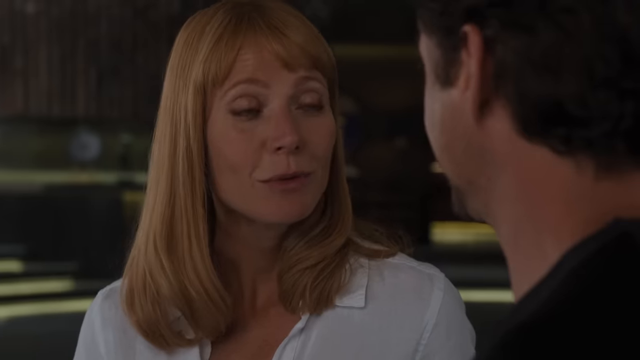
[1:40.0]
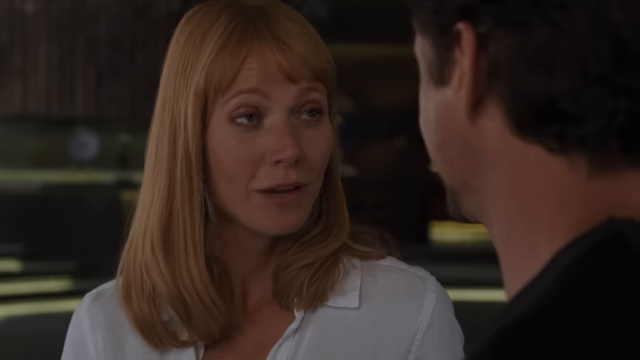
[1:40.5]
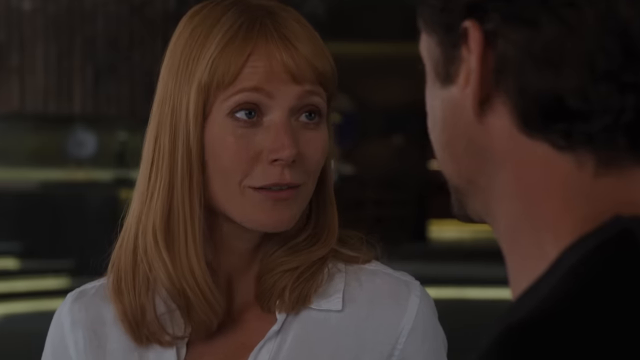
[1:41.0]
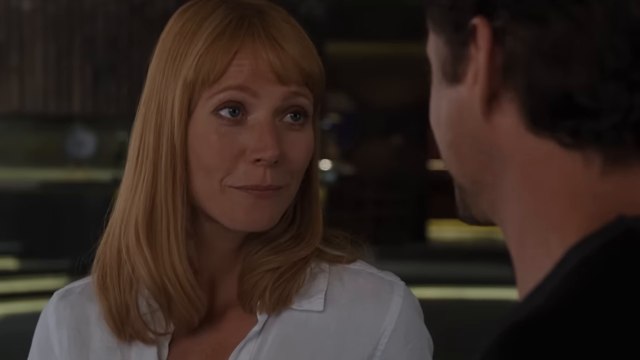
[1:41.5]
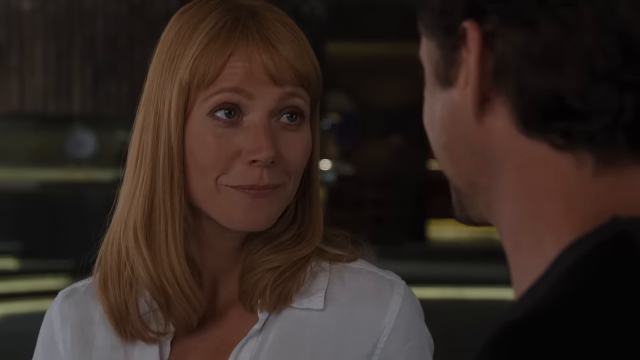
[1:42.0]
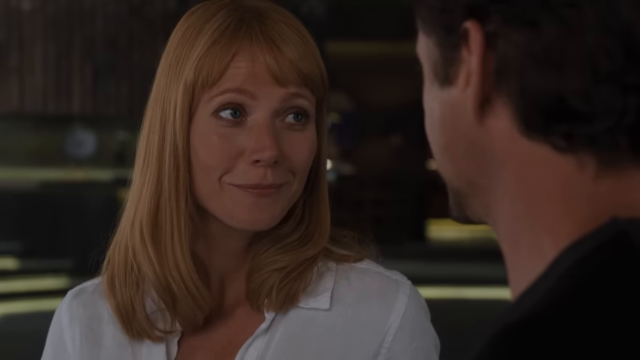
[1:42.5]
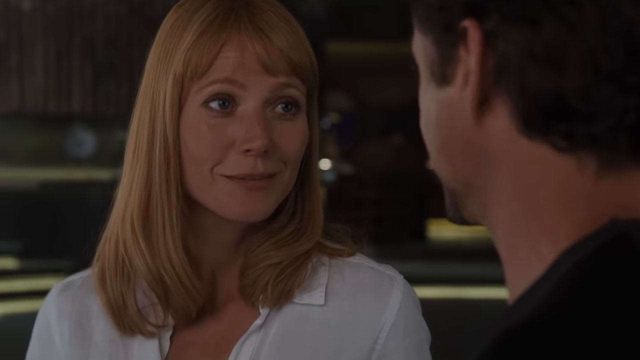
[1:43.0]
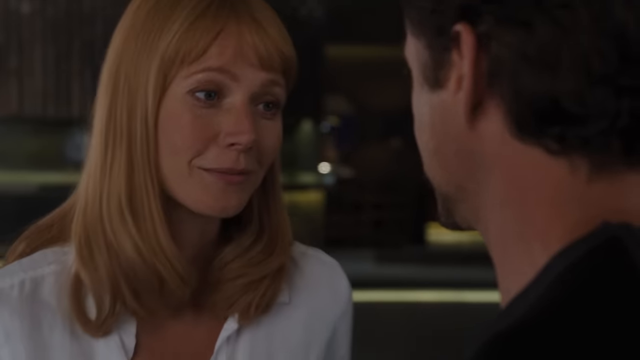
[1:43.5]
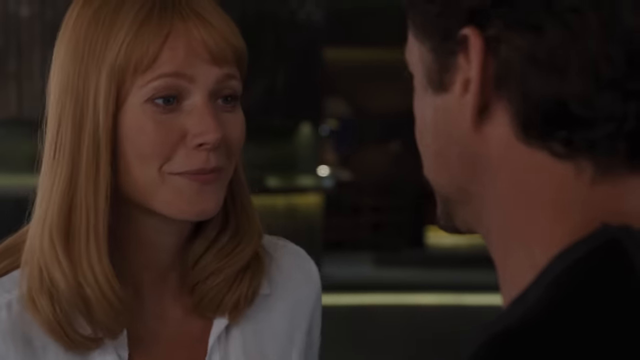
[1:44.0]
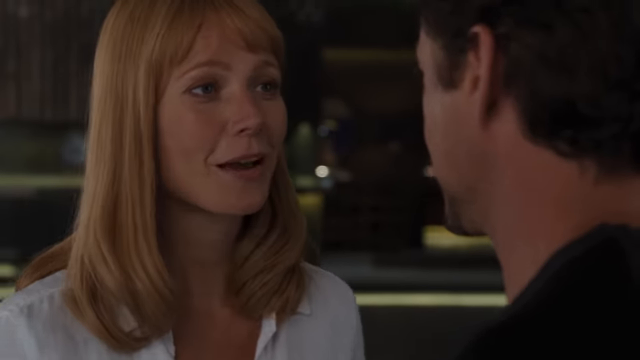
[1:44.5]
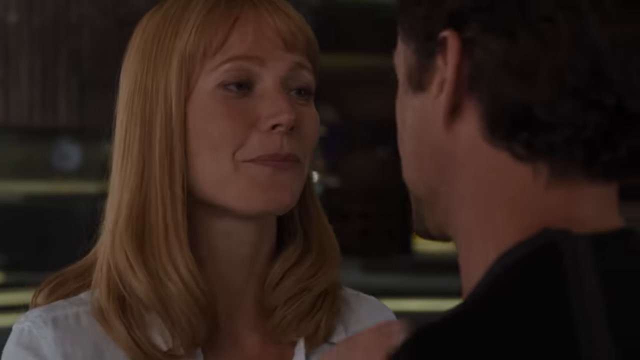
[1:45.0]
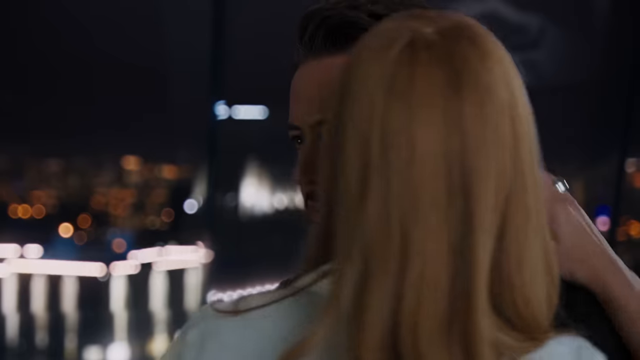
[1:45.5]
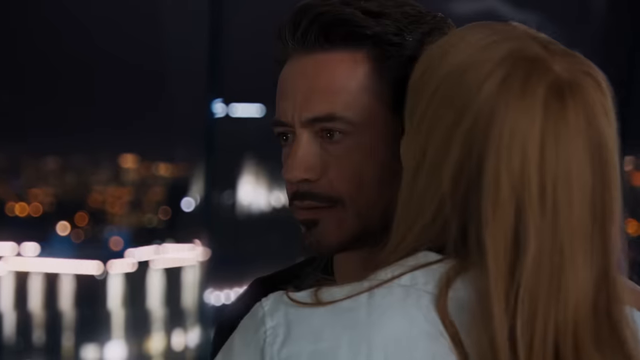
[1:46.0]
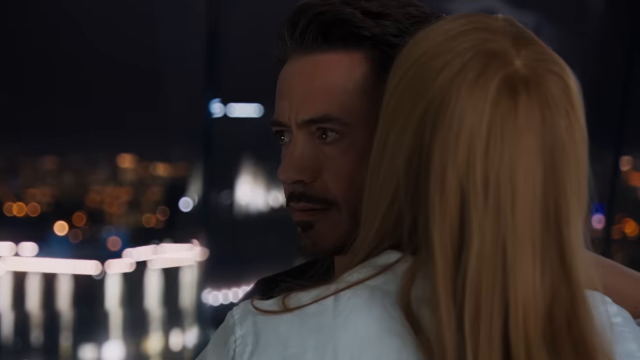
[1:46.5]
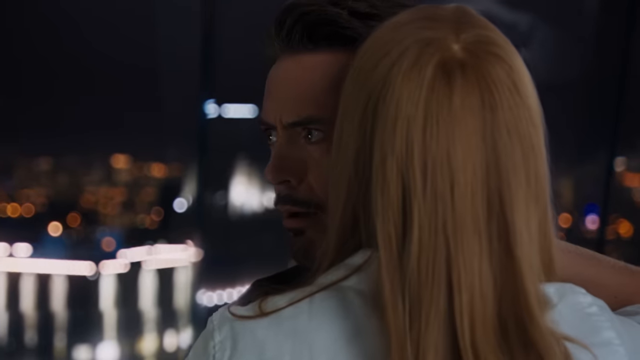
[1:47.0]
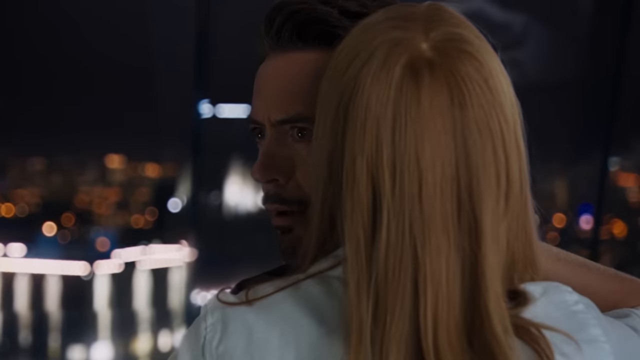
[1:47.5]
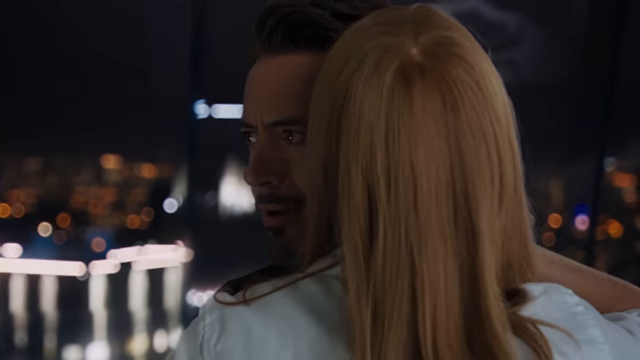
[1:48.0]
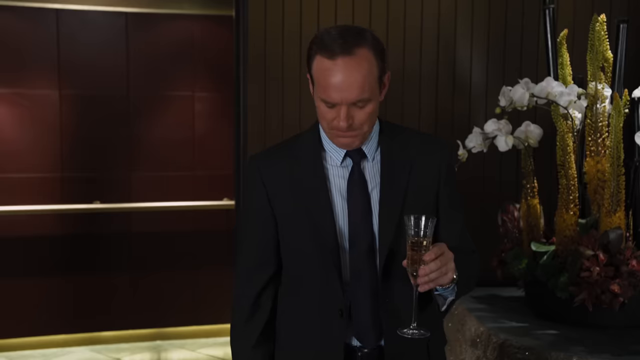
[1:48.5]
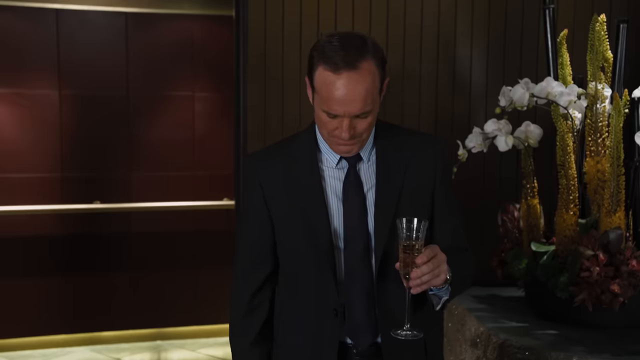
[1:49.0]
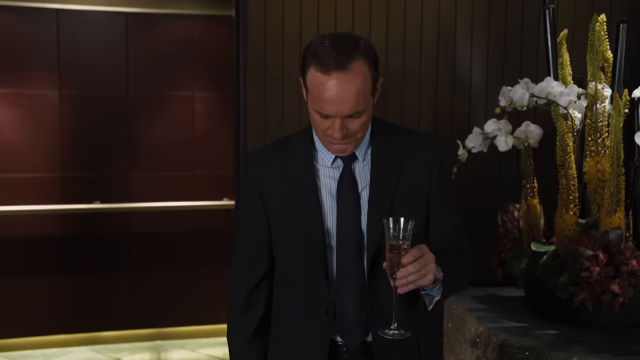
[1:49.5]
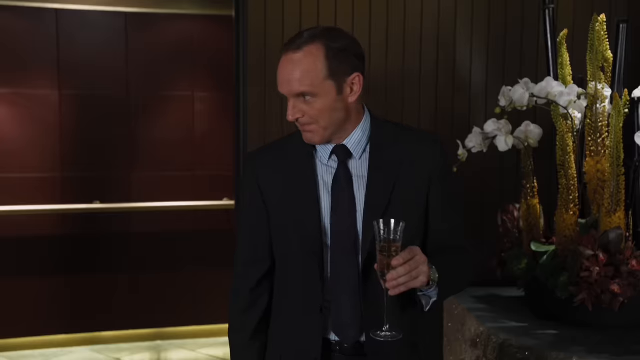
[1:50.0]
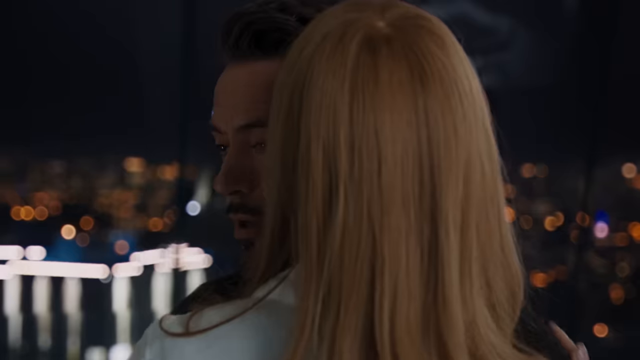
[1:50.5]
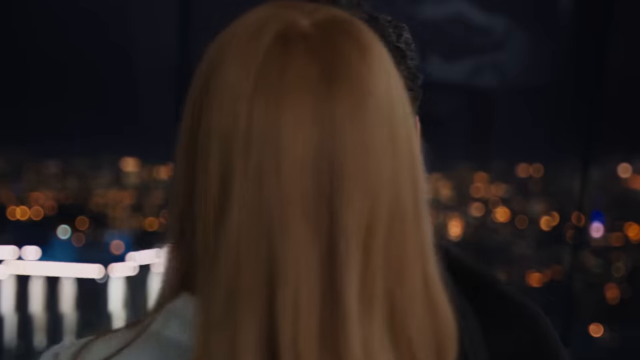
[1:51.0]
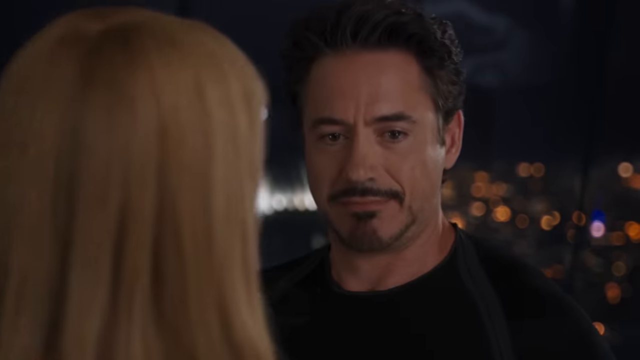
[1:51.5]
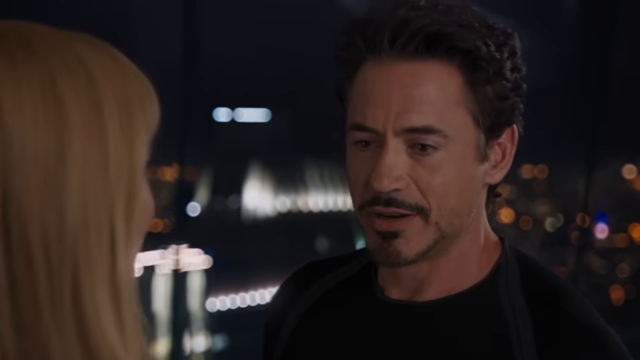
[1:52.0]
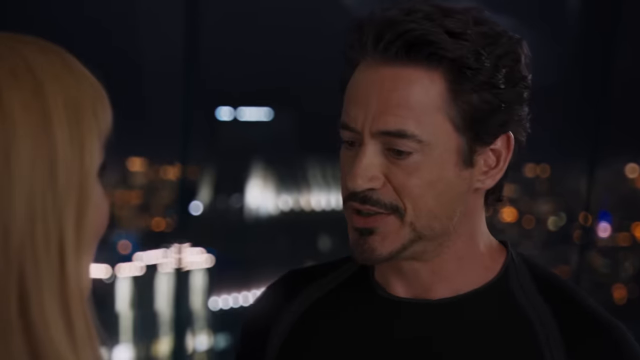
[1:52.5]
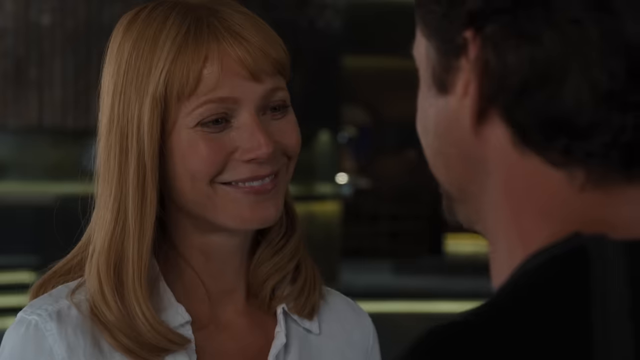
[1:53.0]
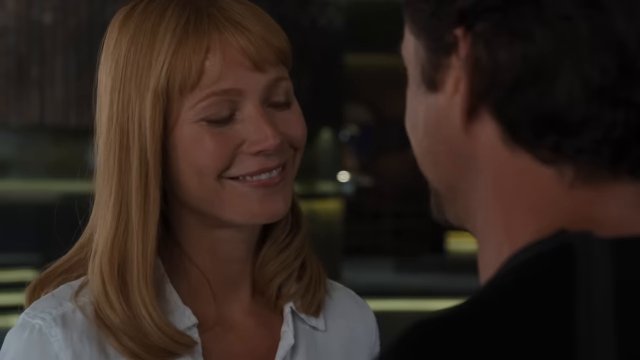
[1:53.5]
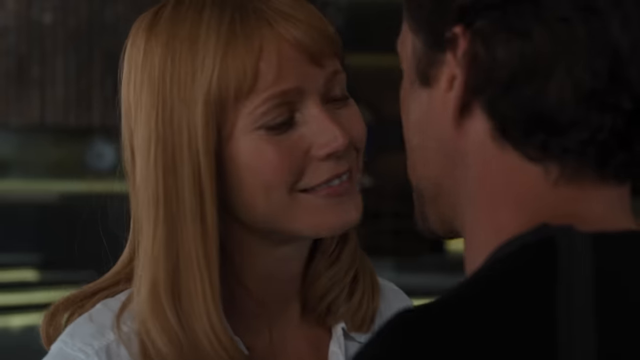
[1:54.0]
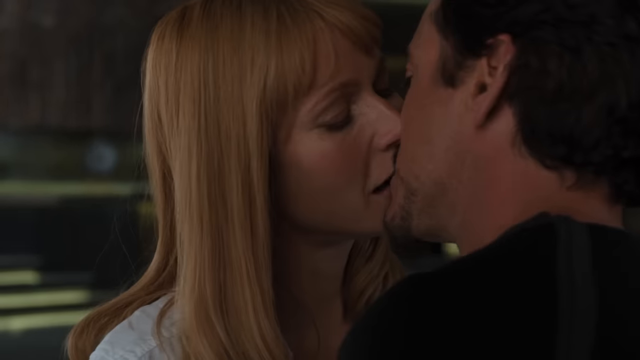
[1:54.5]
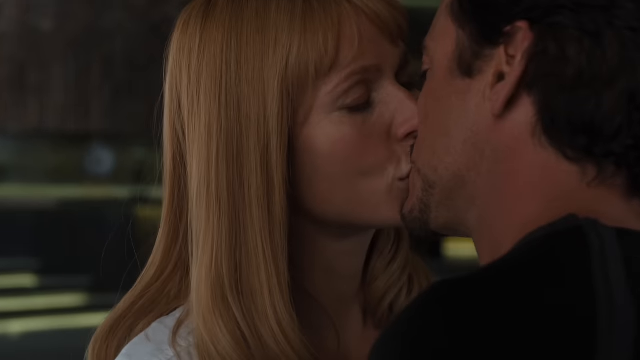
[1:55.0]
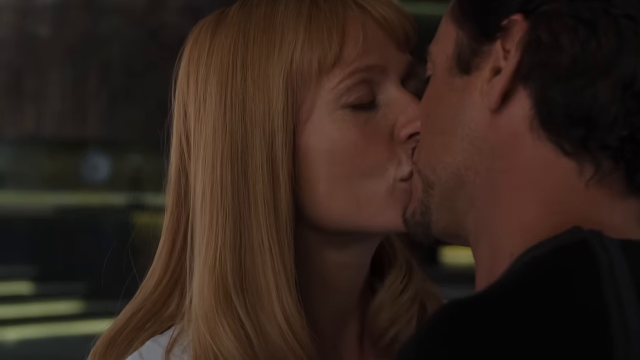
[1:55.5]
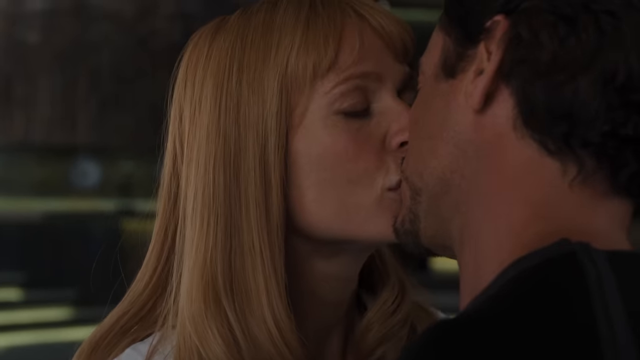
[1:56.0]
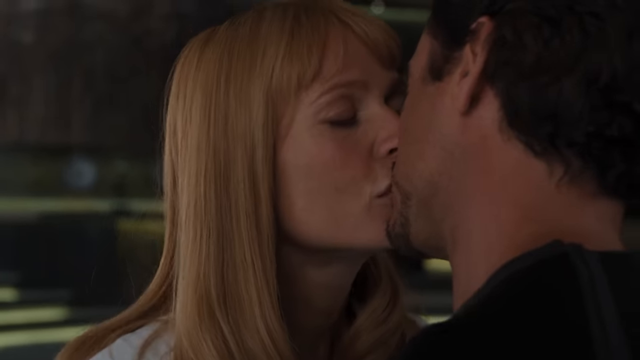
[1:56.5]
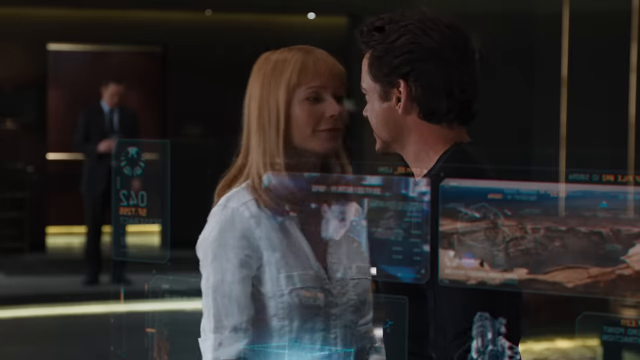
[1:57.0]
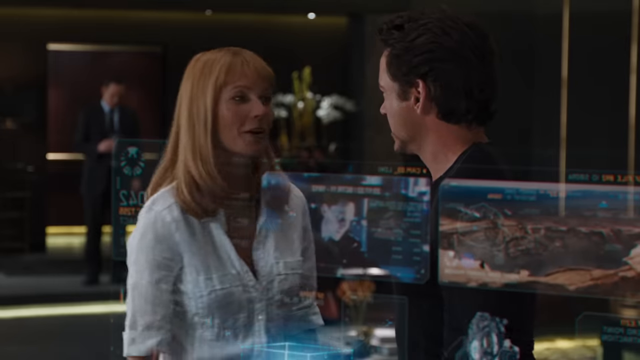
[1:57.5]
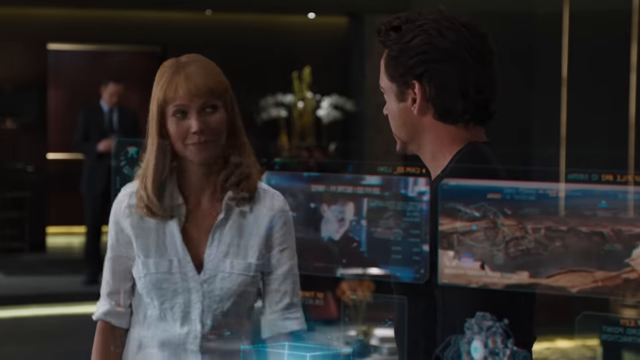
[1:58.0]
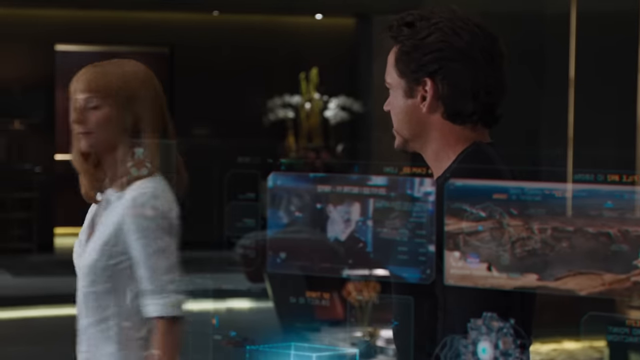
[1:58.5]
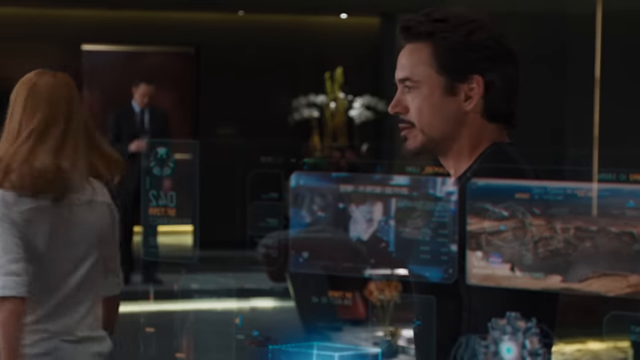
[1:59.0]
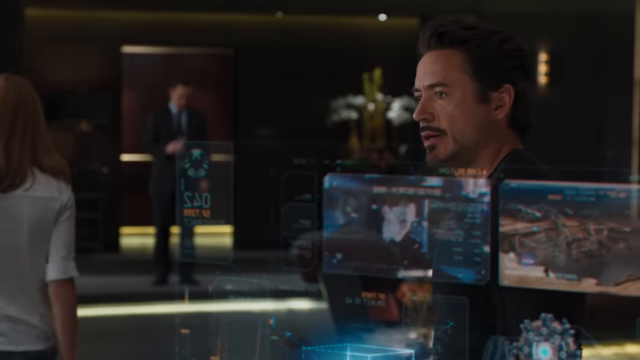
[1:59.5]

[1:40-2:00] Robert Downey Jr., the main character, is in his mid-50s with dark hair, dark eyes and a black mustache and goatee. His female co-star has red hair, possibly blue or green eyes, a red complexion, a white top and blue jean shorts. They get very close to one another and smile at one another, and she either whispers into his ear or kisses his ear. The other gentleman looks down and blushes; he is in his mid-50s with a receding hairline and black hair, wearing a dark suit, a dark tie and a blue shirt, with a glass of wine or champagne in his hand. The lady who just spoke to Robert then smiles at him.